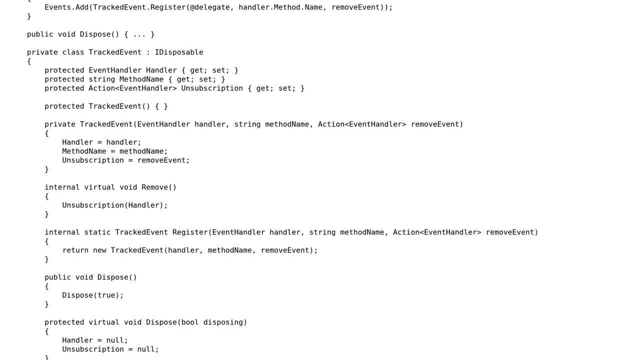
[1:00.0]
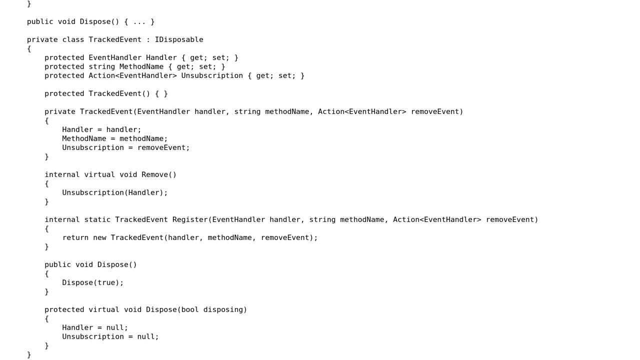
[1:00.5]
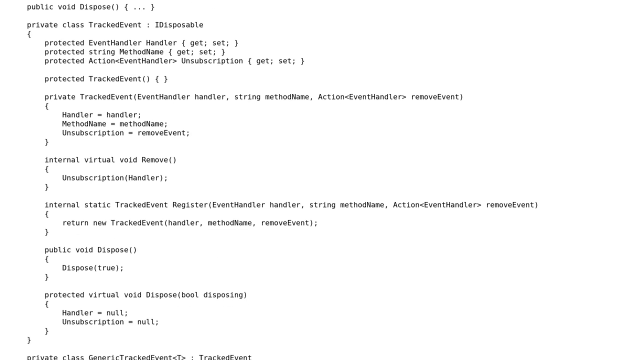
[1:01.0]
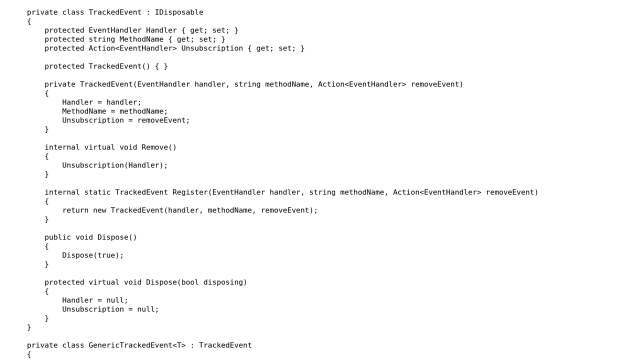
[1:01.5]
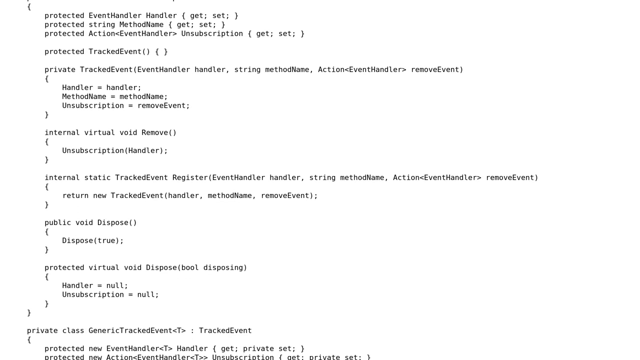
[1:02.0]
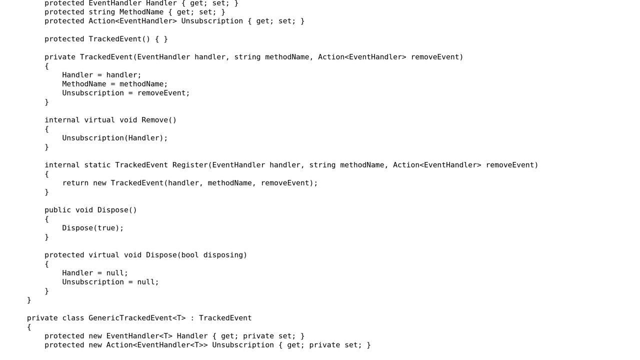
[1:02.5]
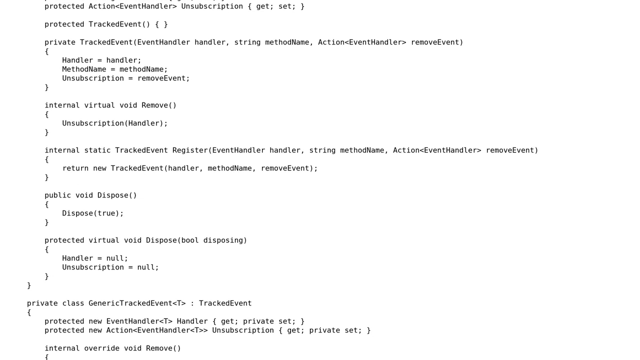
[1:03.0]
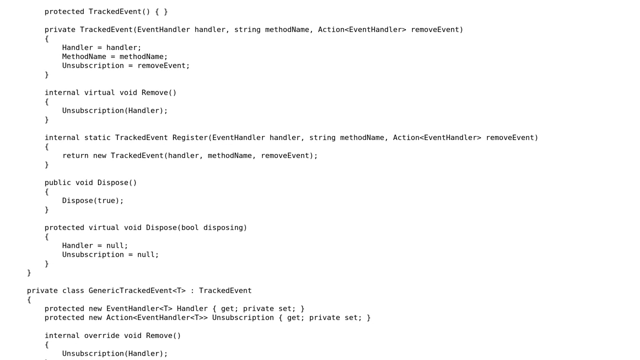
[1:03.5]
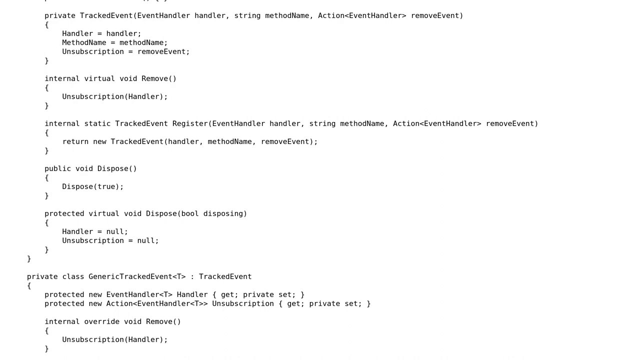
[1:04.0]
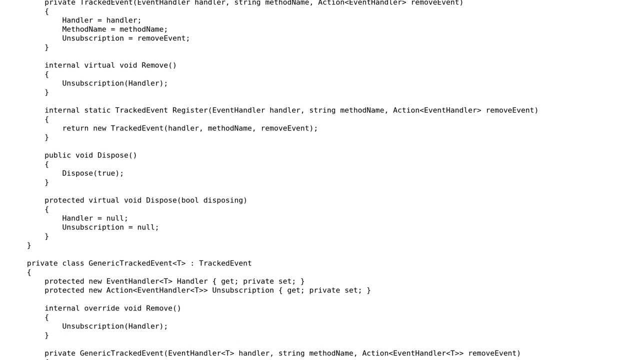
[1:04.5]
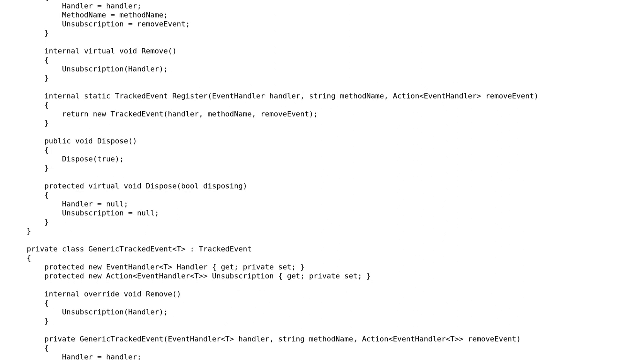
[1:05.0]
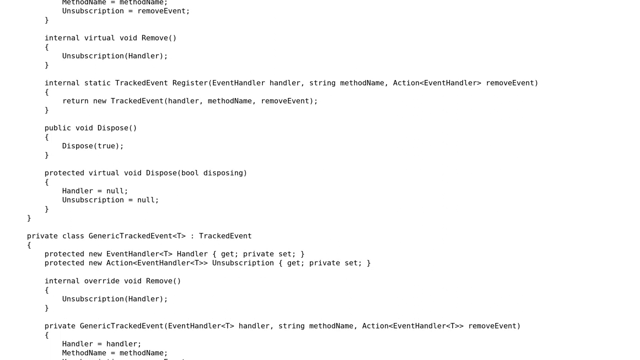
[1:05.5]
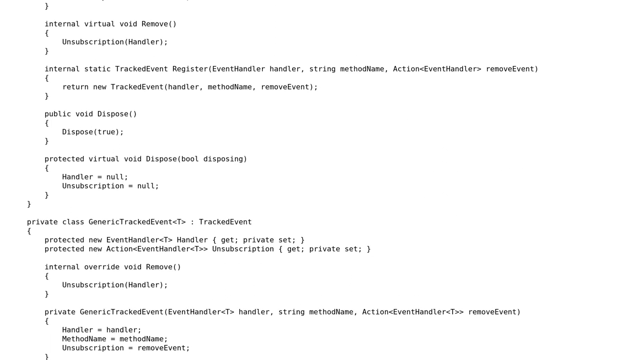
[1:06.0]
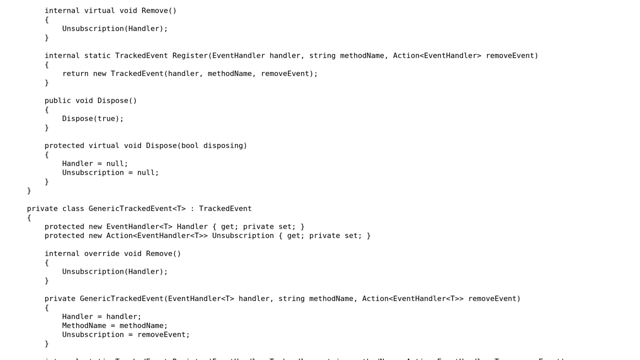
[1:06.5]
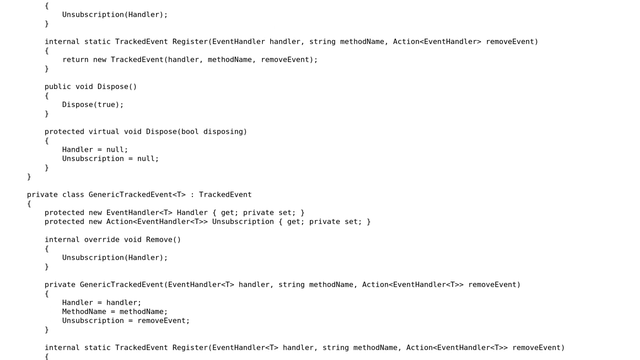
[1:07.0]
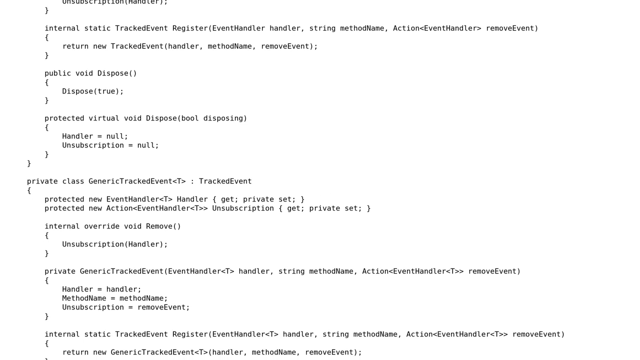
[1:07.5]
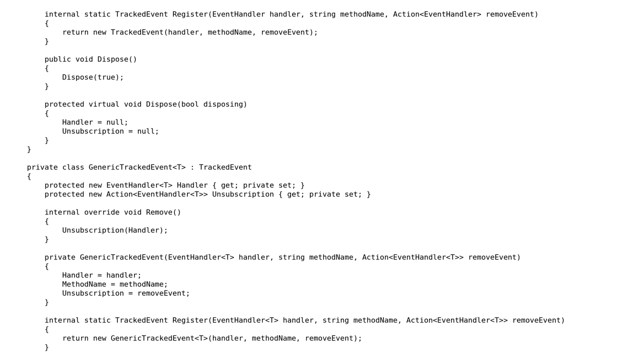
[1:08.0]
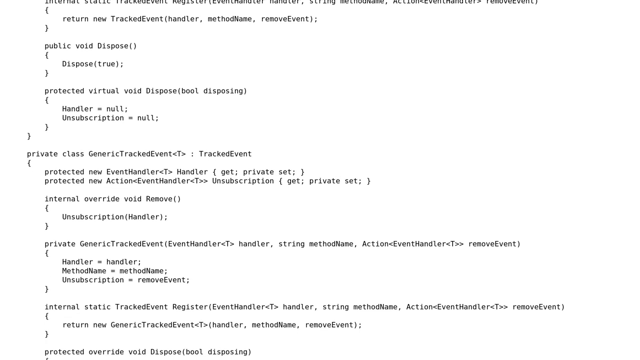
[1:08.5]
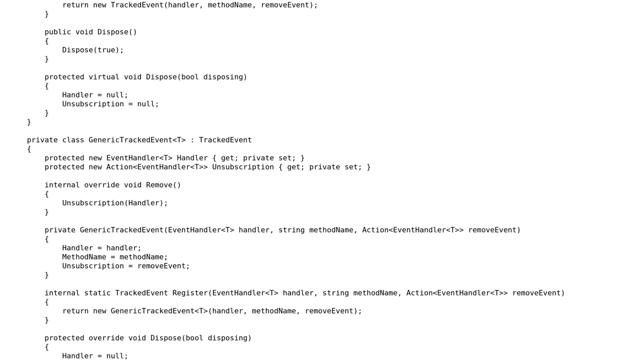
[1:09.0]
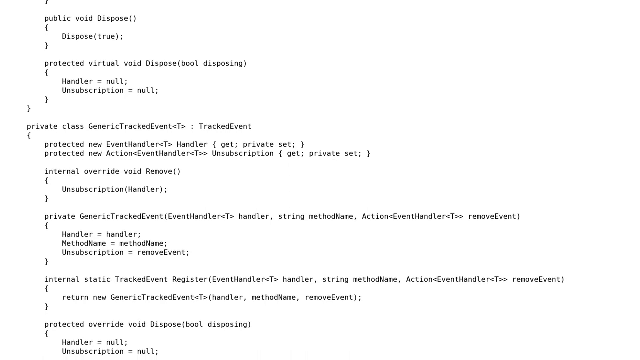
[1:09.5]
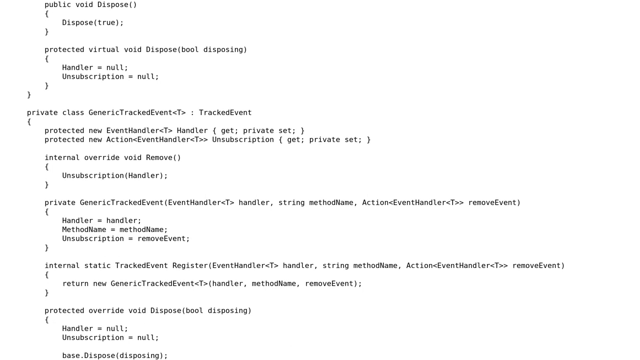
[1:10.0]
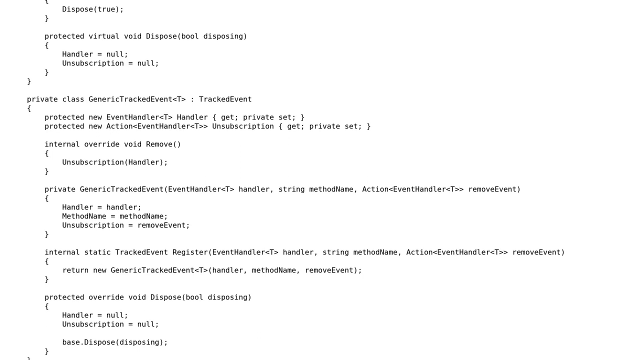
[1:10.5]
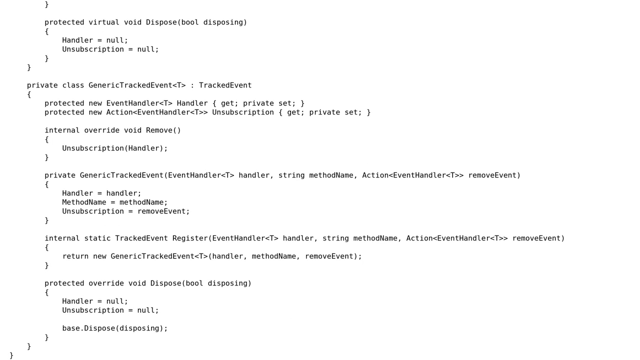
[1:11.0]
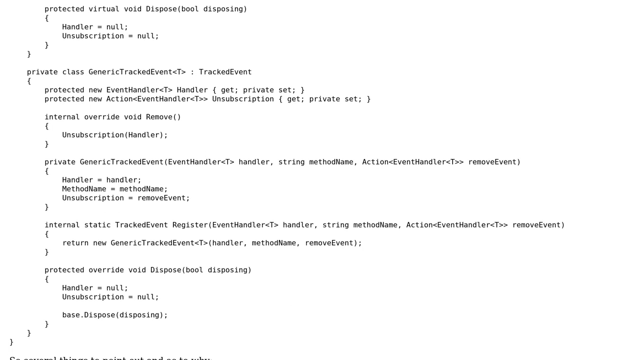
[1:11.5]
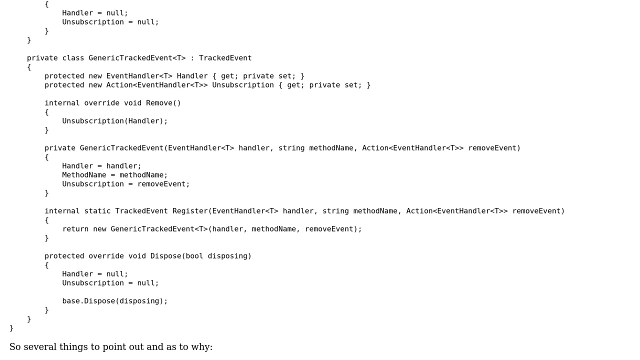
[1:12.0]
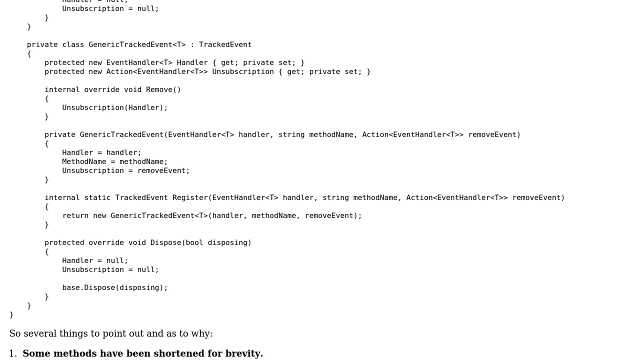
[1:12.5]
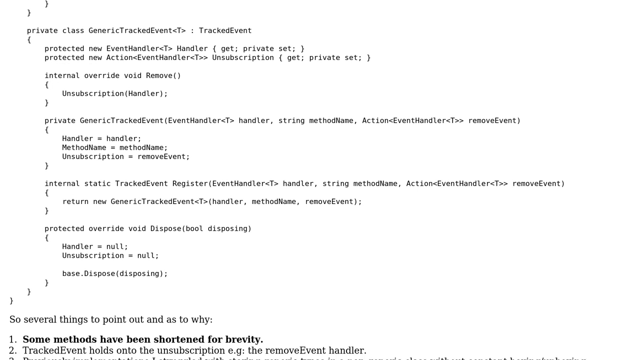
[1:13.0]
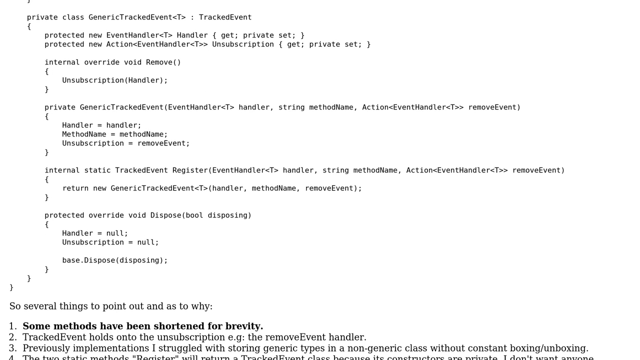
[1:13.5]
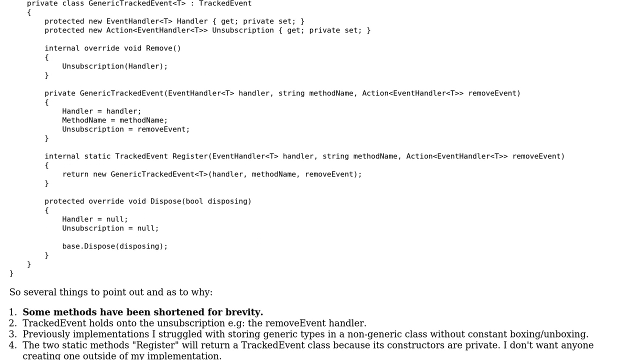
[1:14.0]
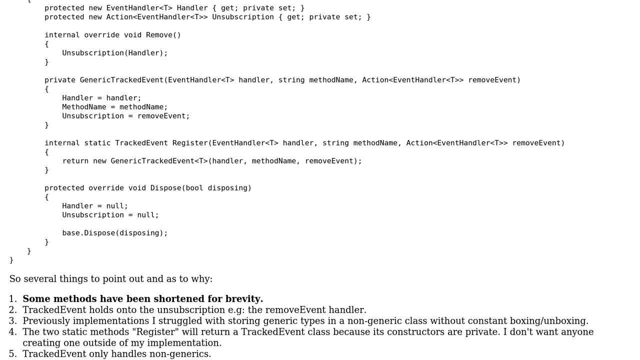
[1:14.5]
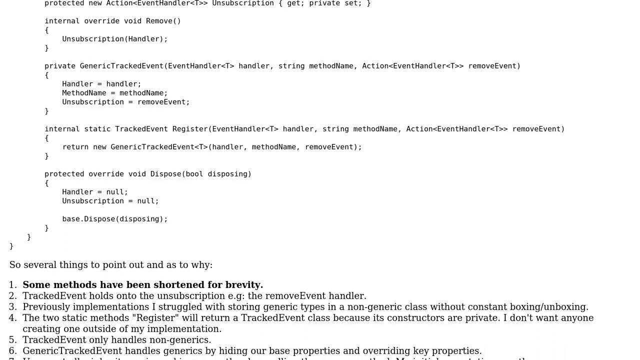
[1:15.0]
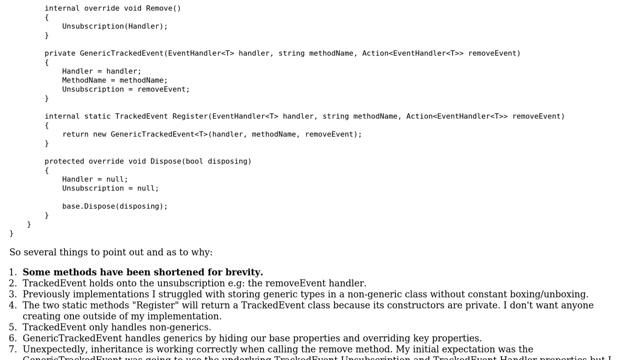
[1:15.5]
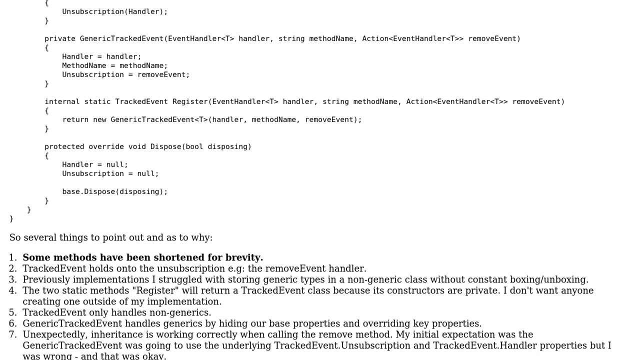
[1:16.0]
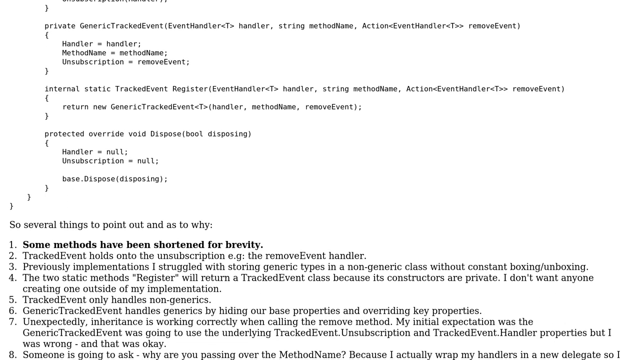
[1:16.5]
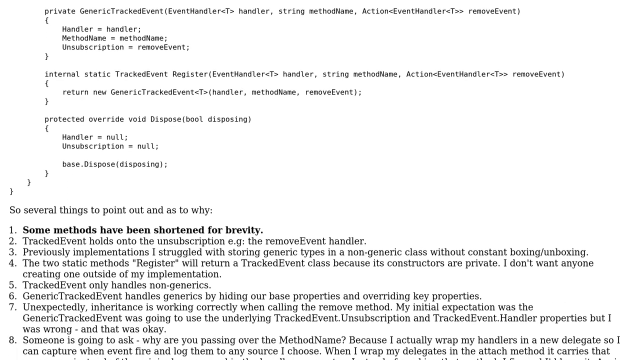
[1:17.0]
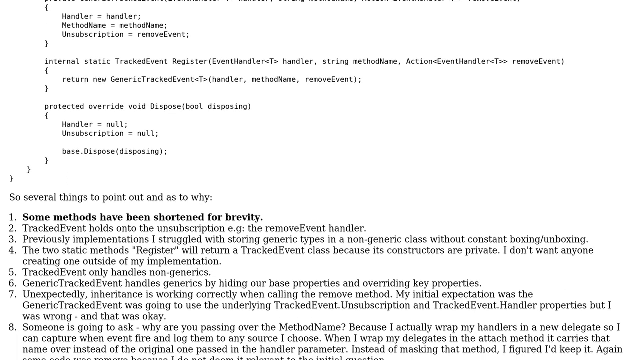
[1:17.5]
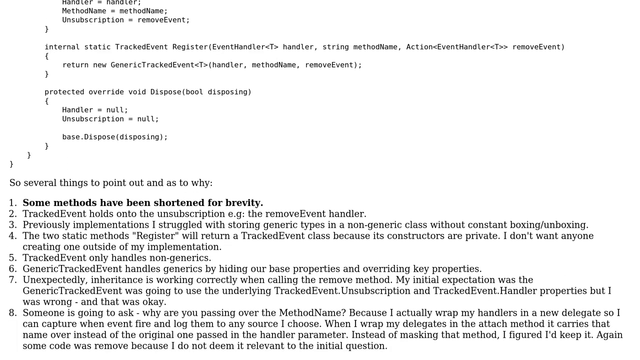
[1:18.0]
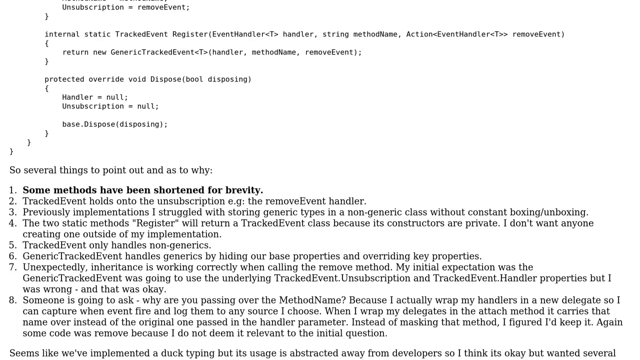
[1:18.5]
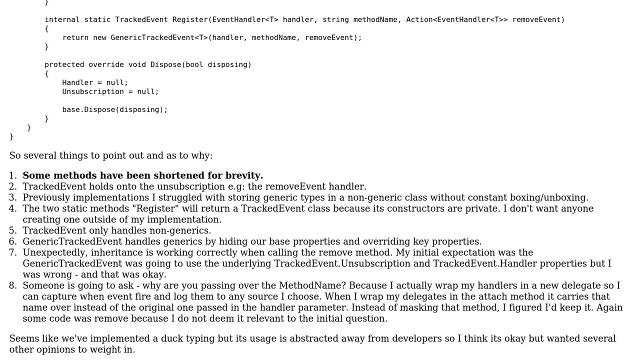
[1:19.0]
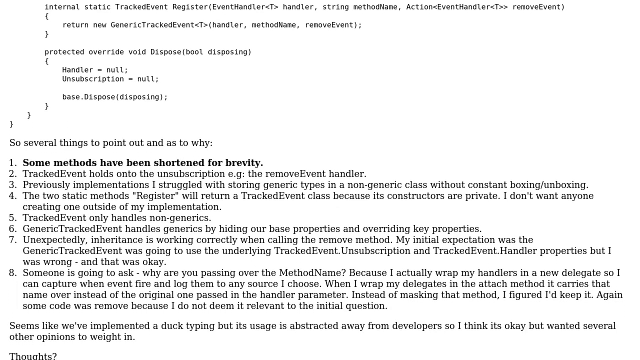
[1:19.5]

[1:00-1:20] A white background scrolls down through very small text showing code, with several areas of code on the page. There is no color involved. The font is probably about size 10, and the code looks like it is all words with half parentheses in different places. The writing is about a page long. The scrolling continues until it reaches a line at the bottom that says "so several things to point out and as to why," and then it stops completely. Below that is a bulleted numbered list; number one, in bold, says "some methods have been shortened for brevity," and the other items concern the code. There are eight numbers in total.